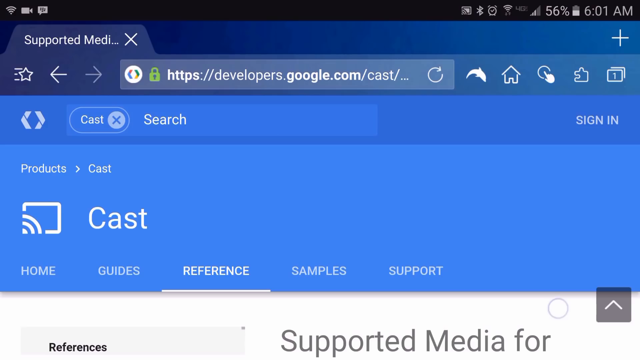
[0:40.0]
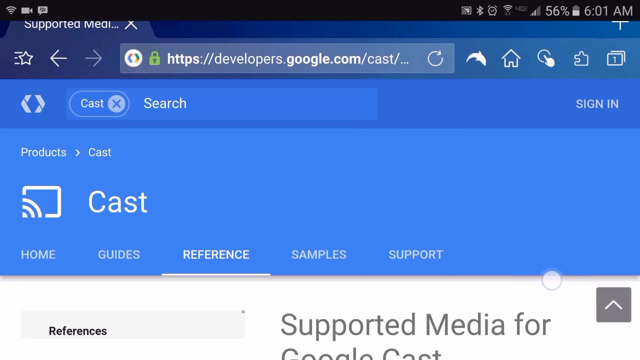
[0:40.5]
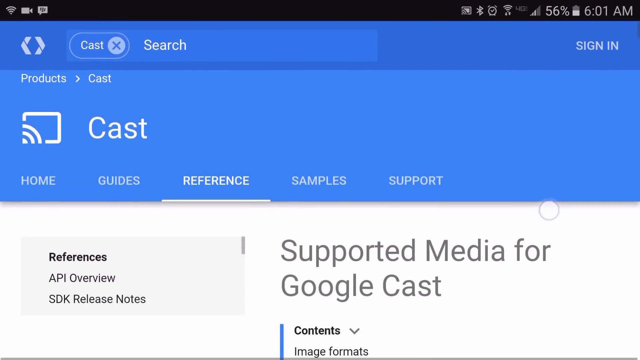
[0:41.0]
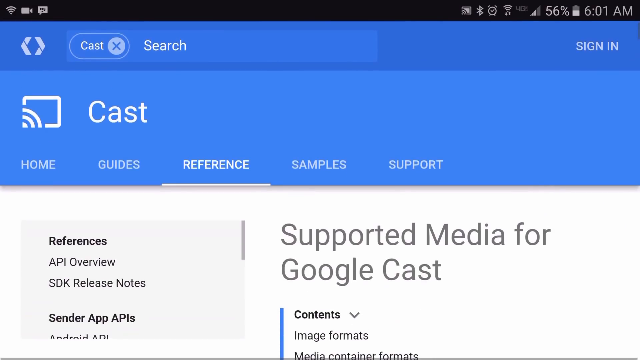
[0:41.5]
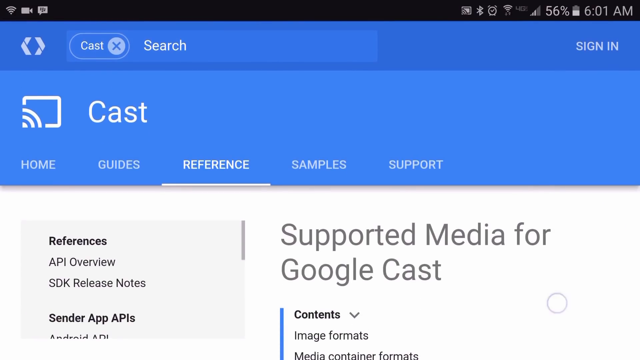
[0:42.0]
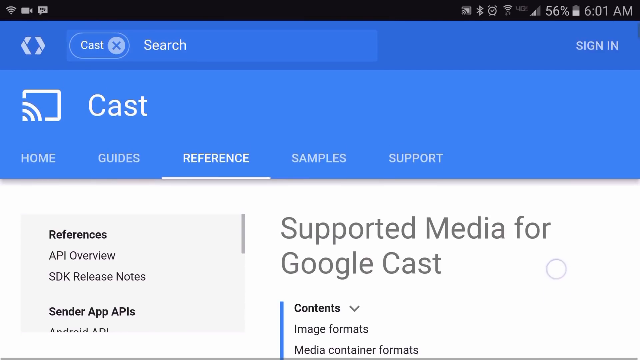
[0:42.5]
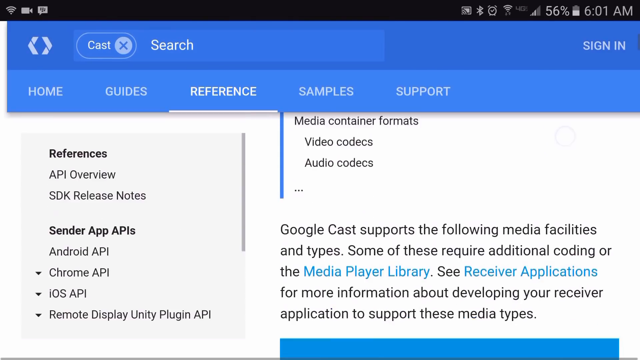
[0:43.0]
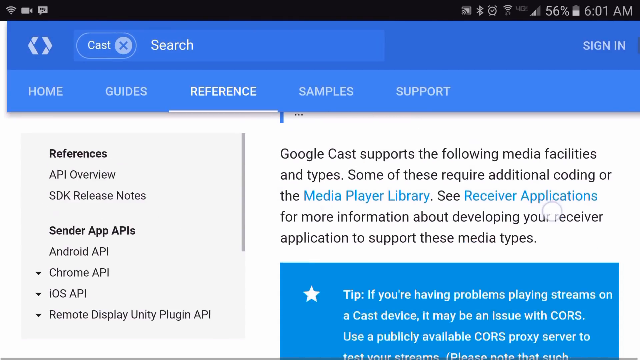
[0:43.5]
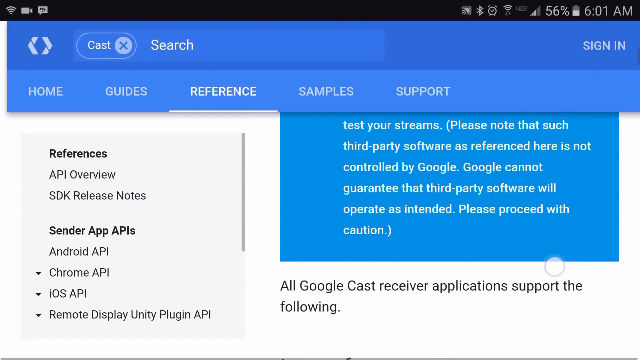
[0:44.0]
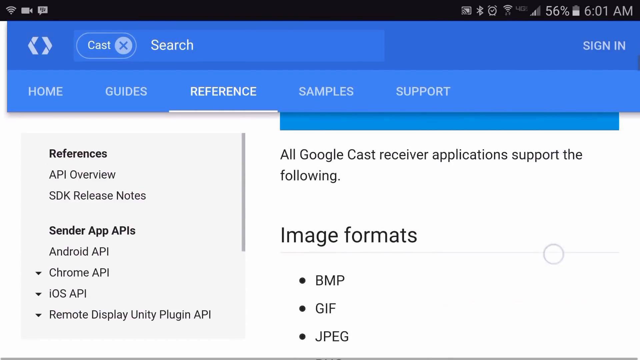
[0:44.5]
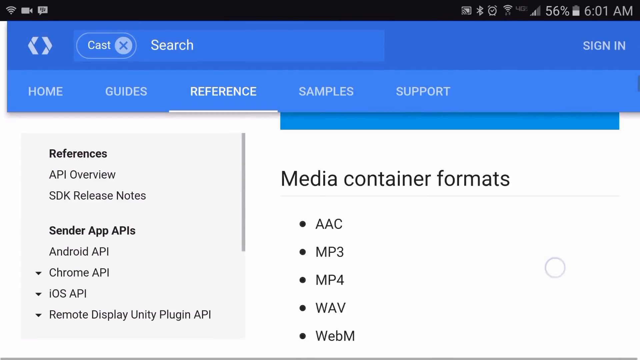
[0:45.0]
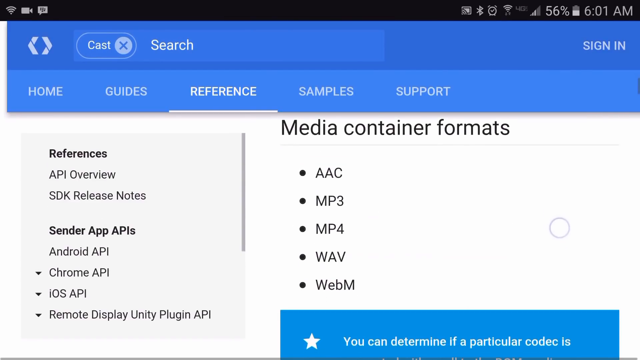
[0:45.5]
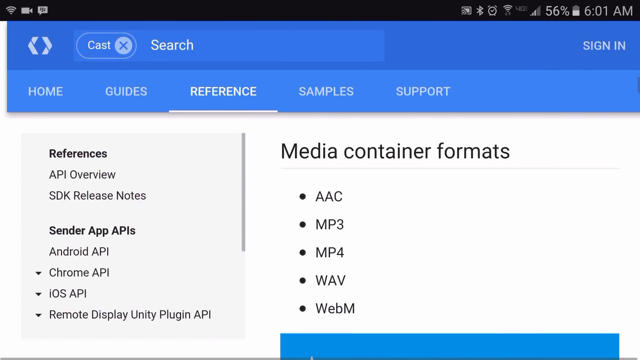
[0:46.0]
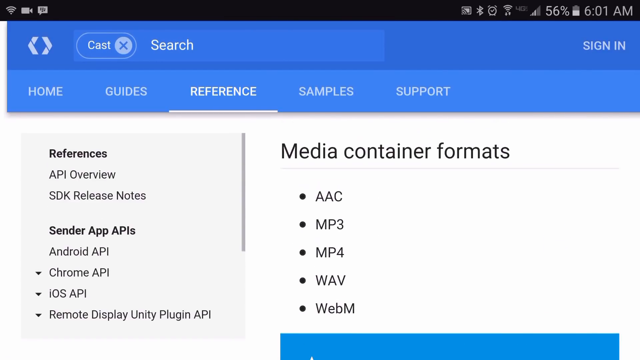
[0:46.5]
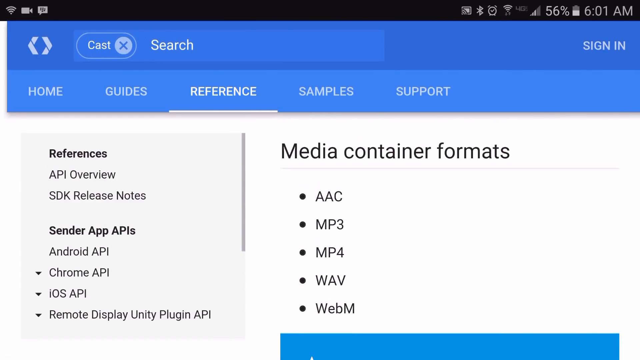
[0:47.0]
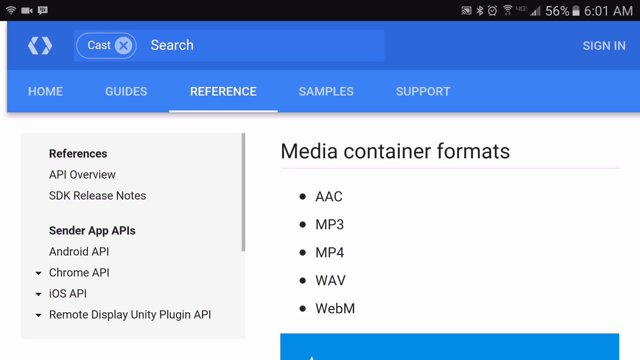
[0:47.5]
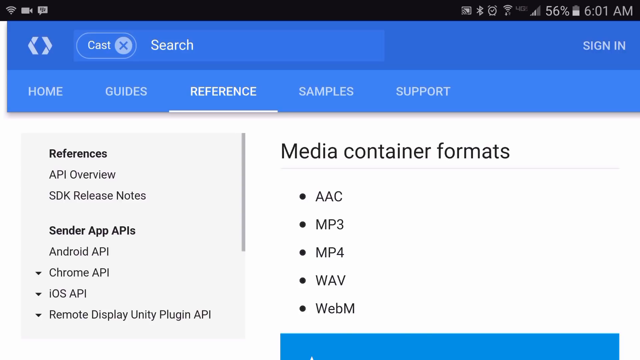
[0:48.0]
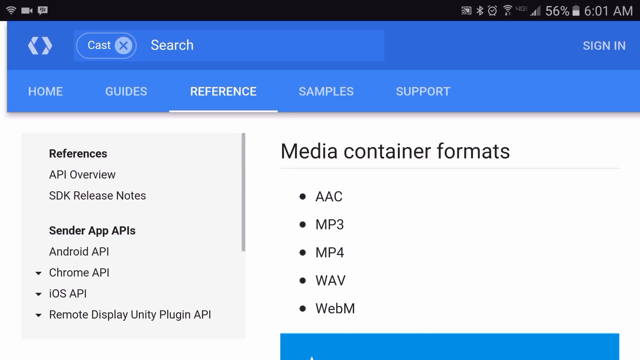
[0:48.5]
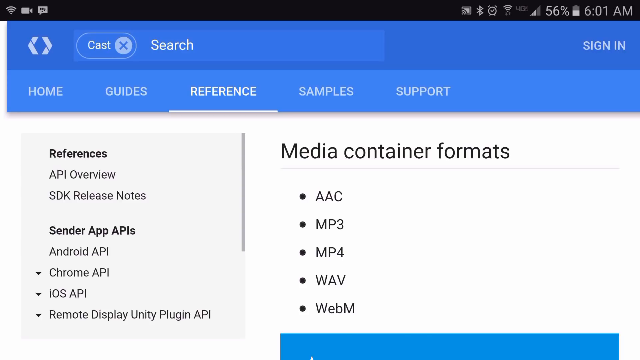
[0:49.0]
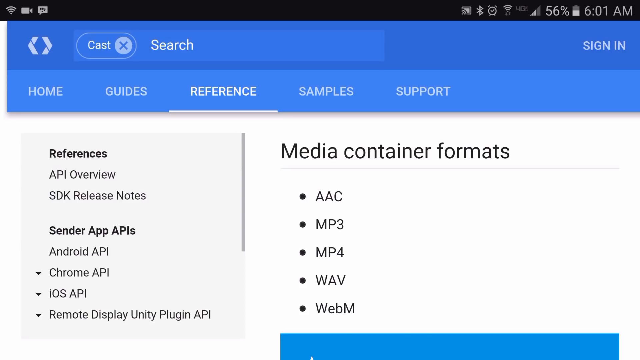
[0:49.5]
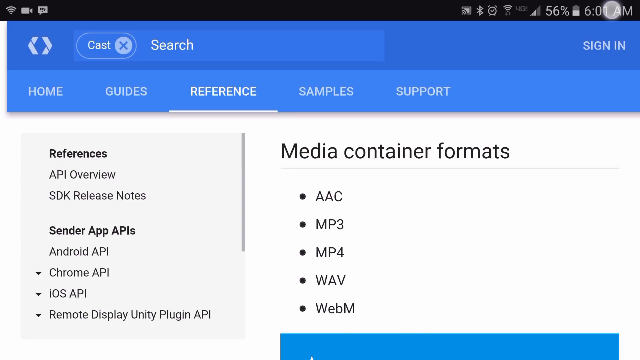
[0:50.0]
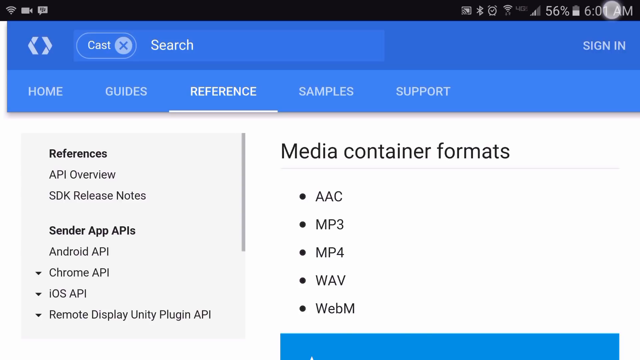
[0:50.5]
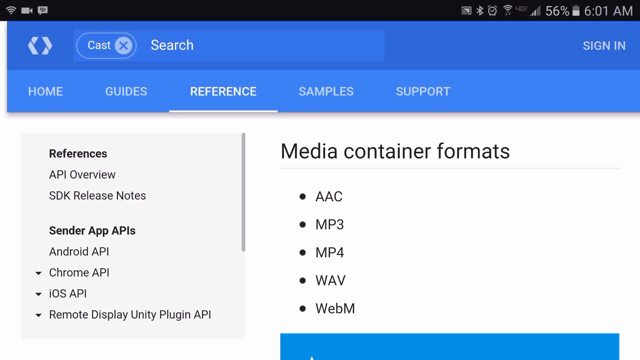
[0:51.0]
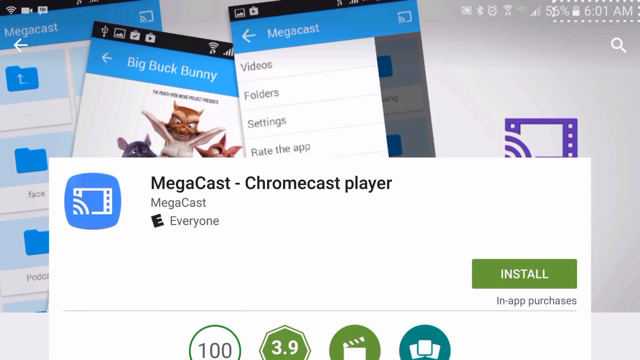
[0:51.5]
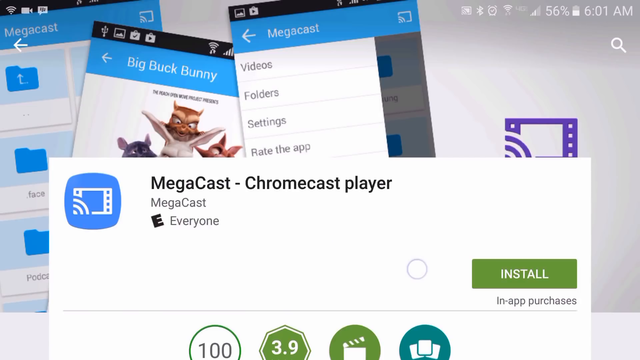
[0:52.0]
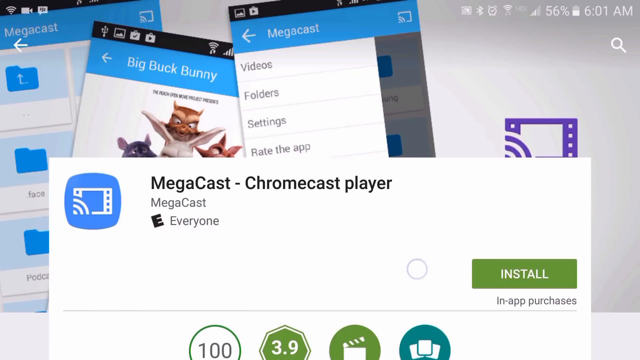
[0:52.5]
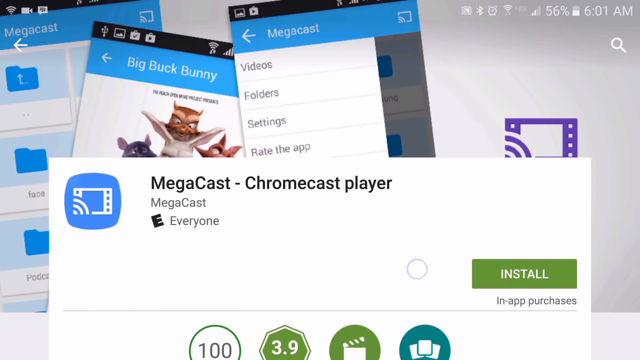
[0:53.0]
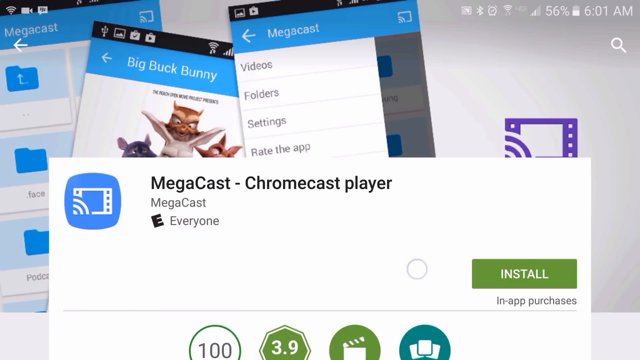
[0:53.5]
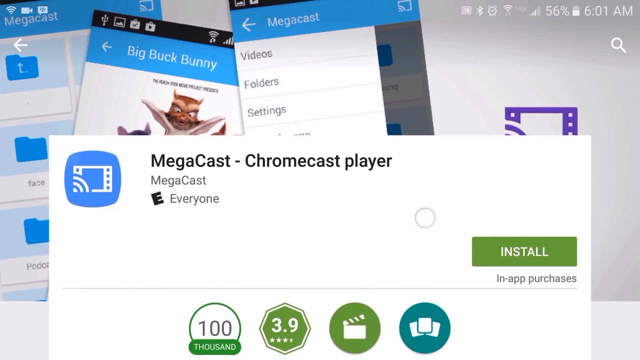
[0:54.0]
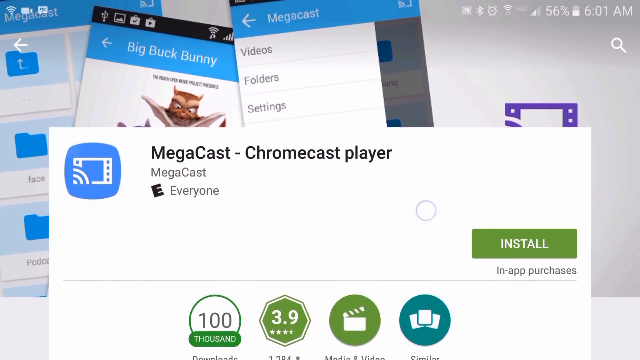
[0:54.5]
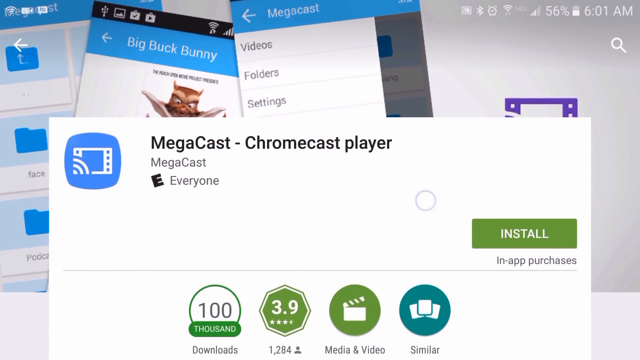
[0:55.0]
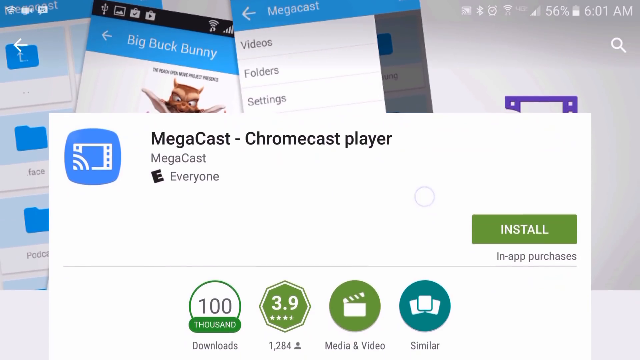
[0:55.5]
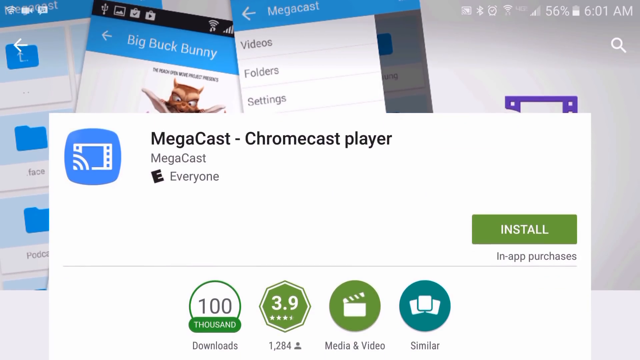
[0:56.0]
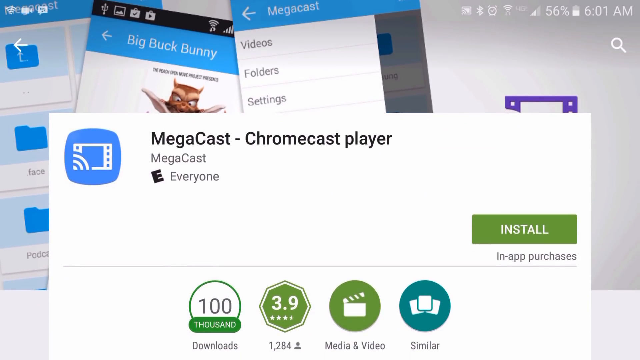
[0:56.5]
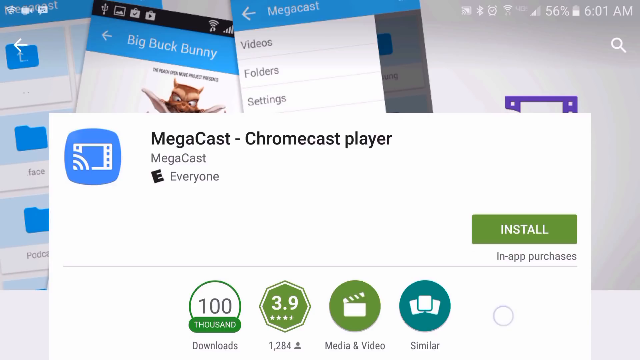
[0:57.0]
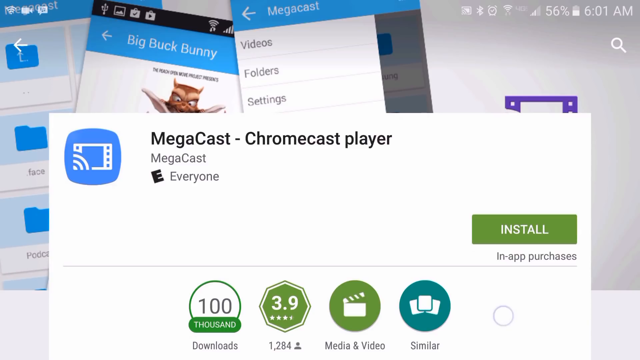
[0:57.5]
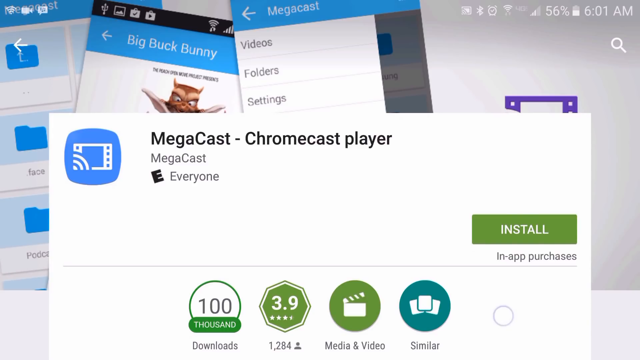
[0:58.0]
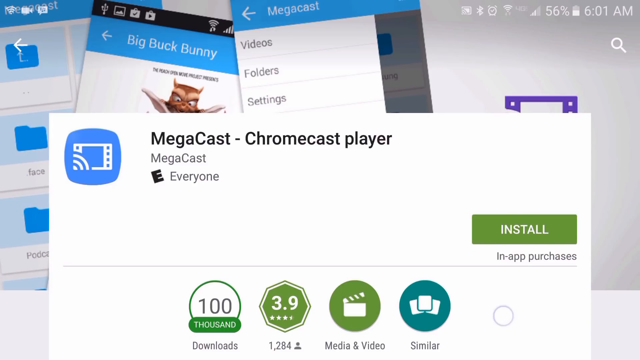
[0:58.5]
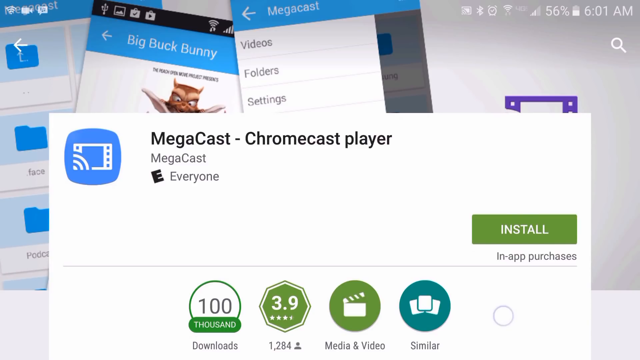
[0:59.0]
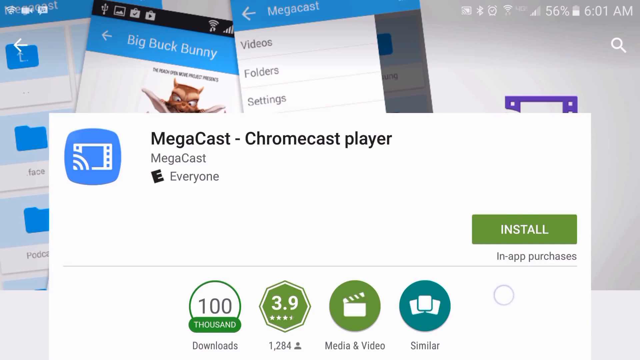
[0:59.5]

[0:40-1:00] A page with a solid blue background opens that says "supported media", with the web address "developers.google.com/cast". Underneath it says "products", and the side category is "cast". There is an image of something like a cast icon with the word "cast" beside it. The page then scrolls very fast through cast support, options for media facility, references and guides, flipping through the information too quickly to follow. It stops briefly on "media container formats" before flipping to a screen that says "MegaCast Chromecast Player" and shows where to get it, apparently from the Google Play Store, with four or five options for it there.